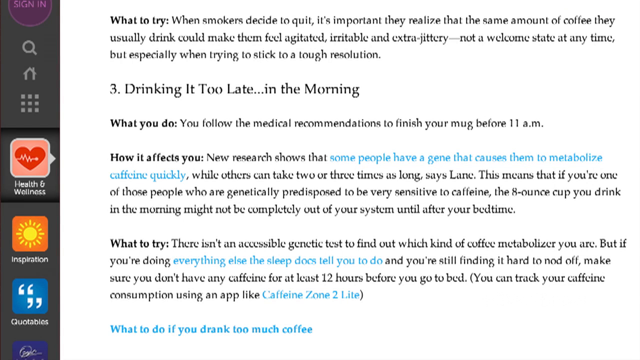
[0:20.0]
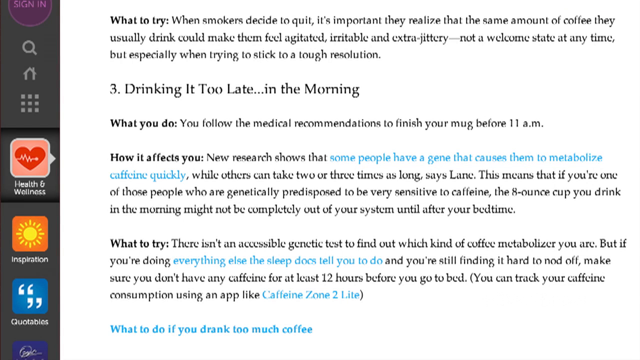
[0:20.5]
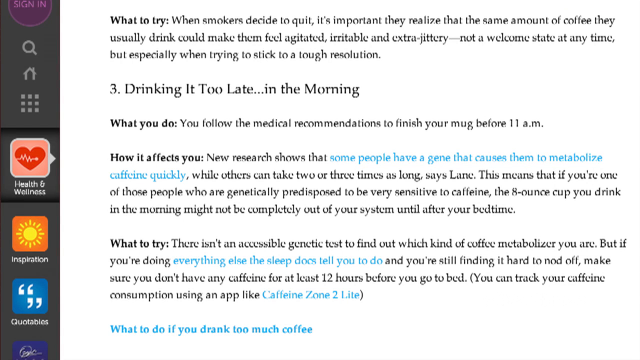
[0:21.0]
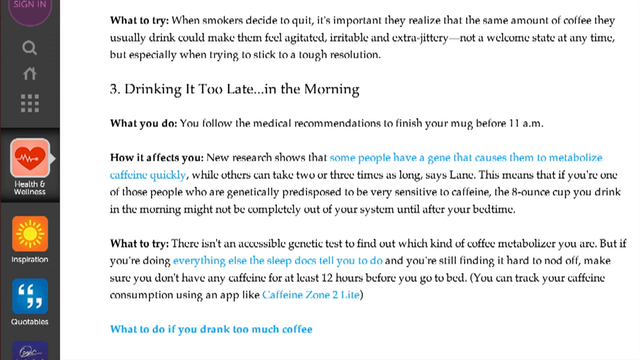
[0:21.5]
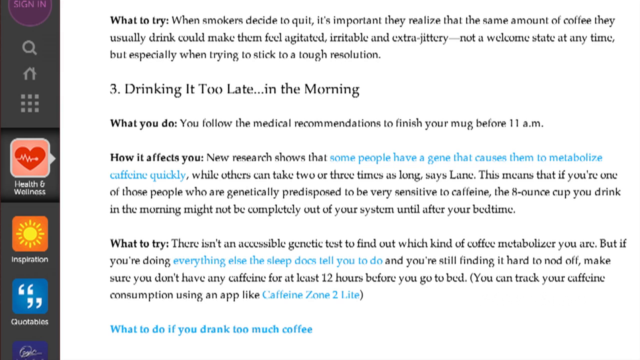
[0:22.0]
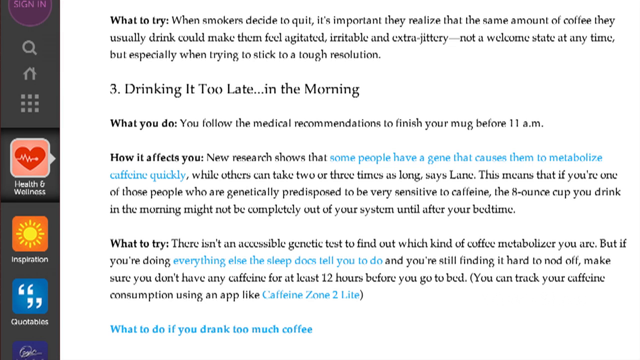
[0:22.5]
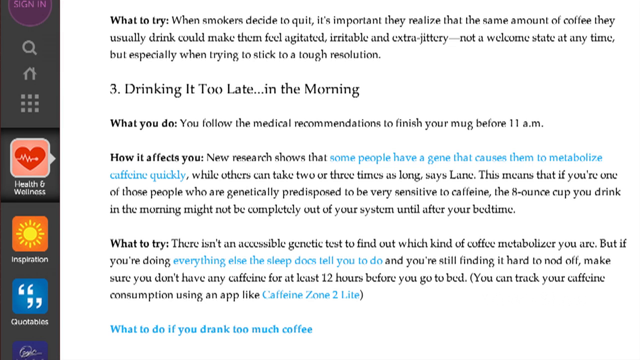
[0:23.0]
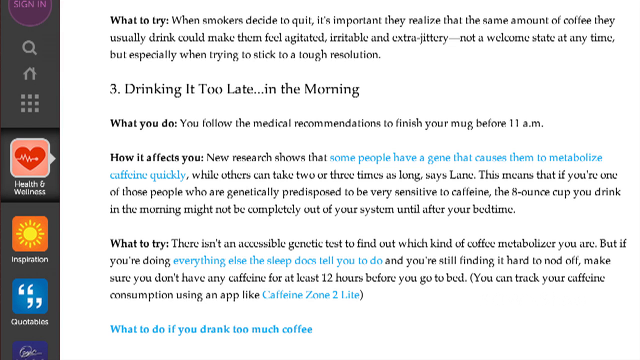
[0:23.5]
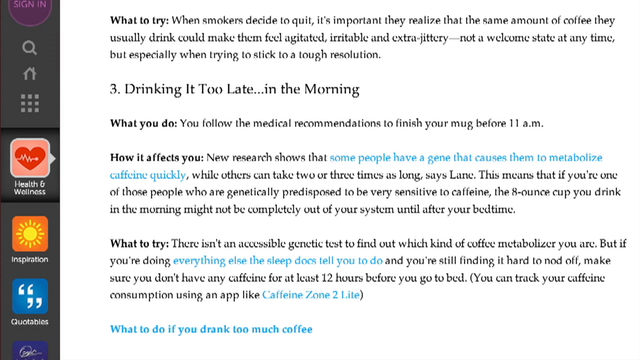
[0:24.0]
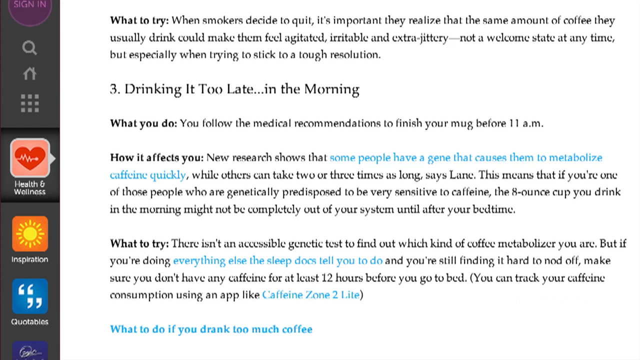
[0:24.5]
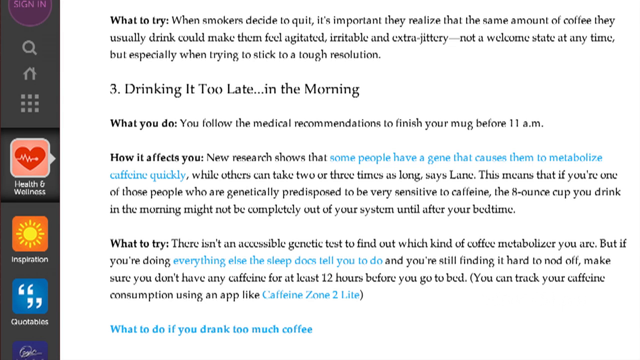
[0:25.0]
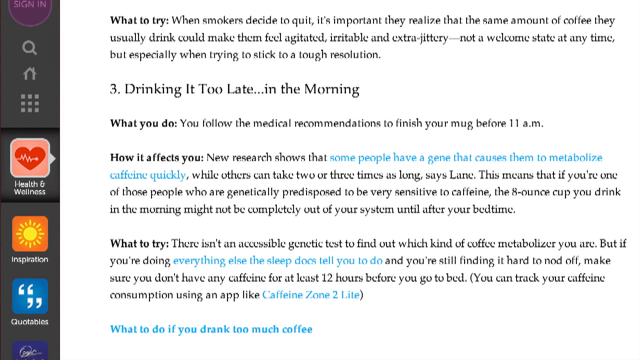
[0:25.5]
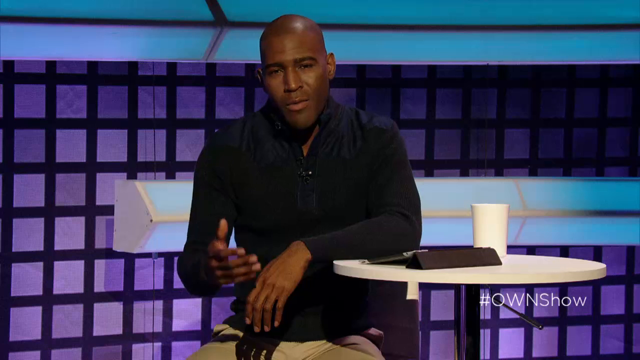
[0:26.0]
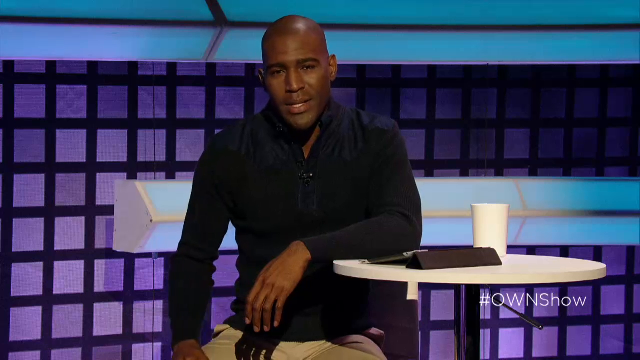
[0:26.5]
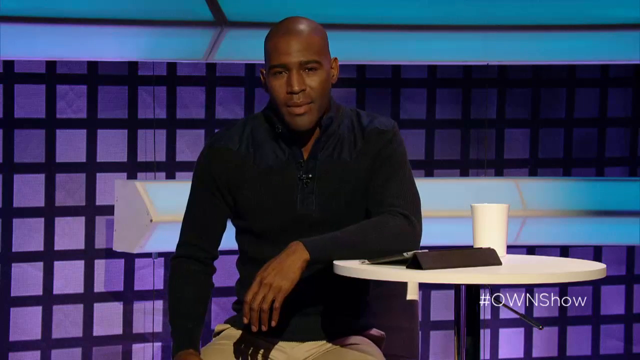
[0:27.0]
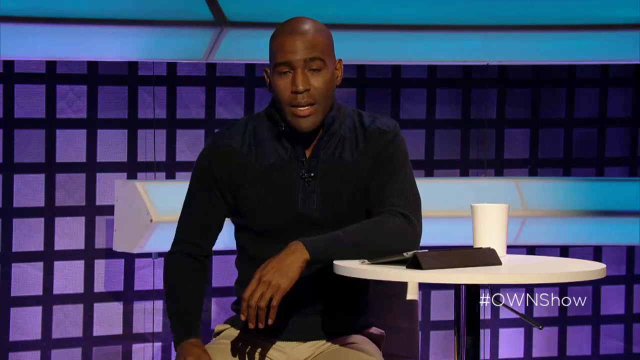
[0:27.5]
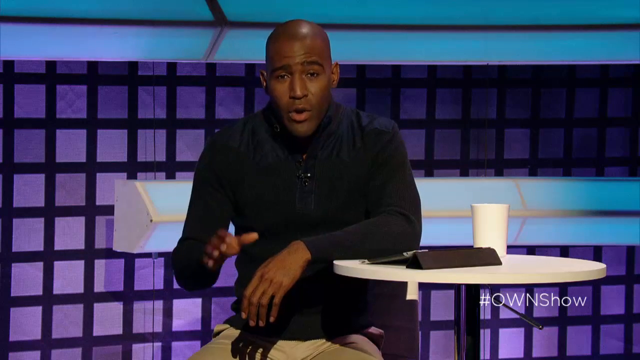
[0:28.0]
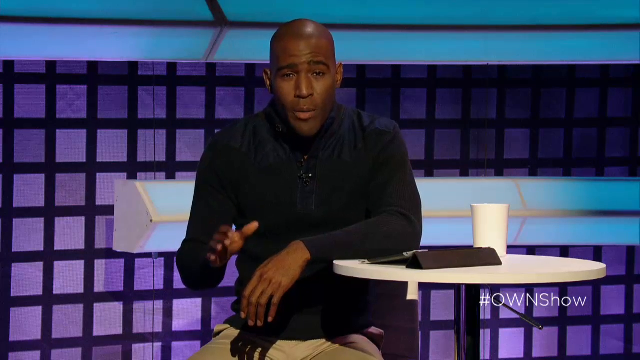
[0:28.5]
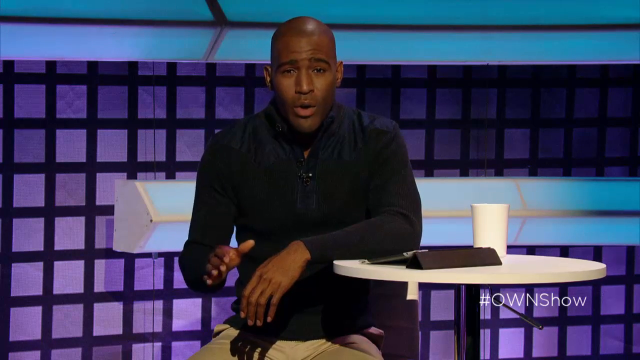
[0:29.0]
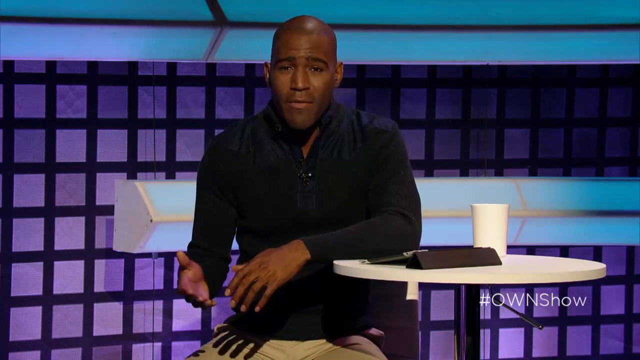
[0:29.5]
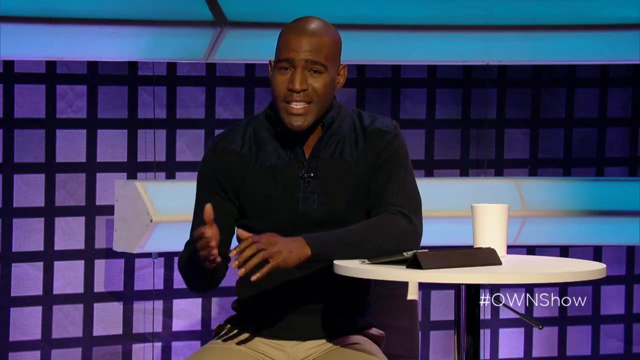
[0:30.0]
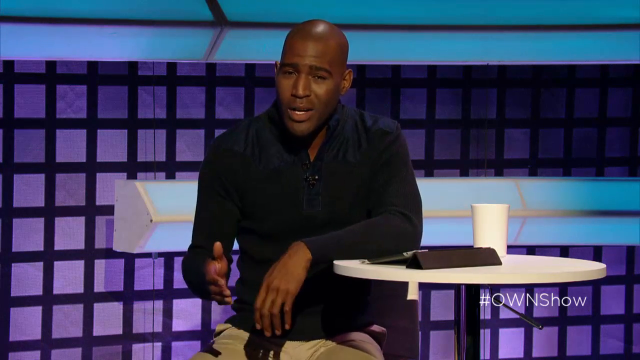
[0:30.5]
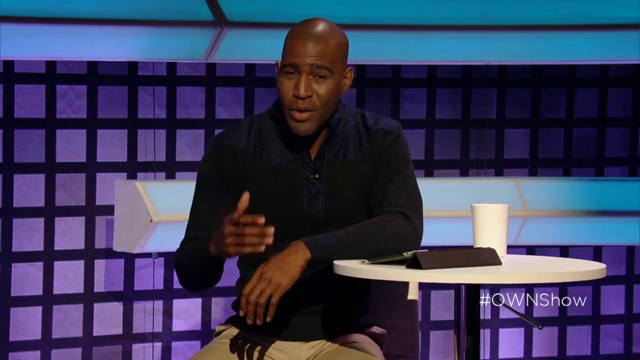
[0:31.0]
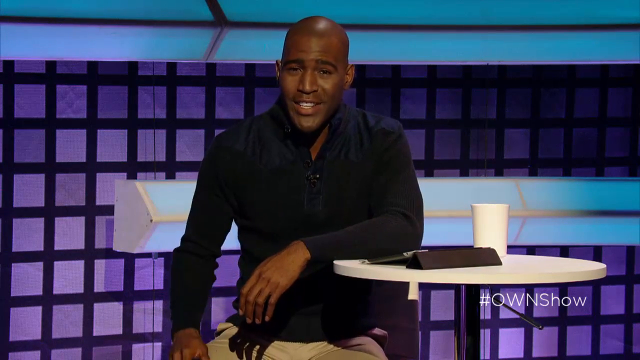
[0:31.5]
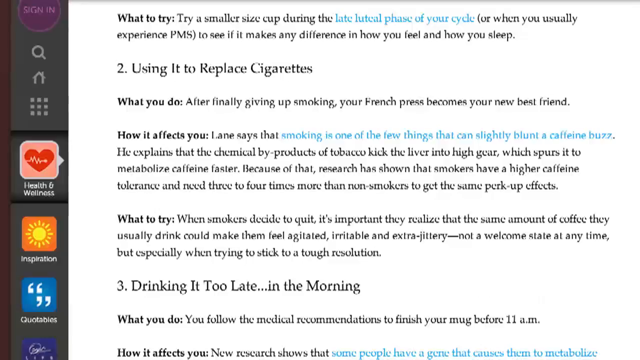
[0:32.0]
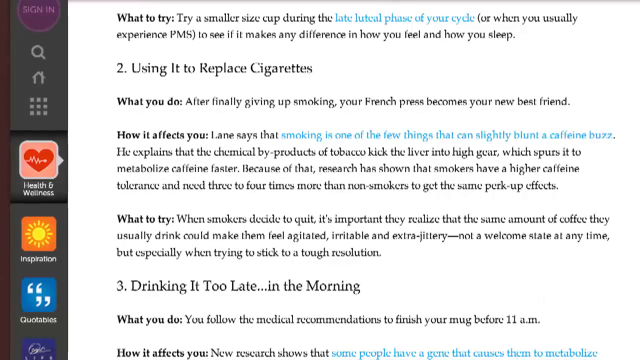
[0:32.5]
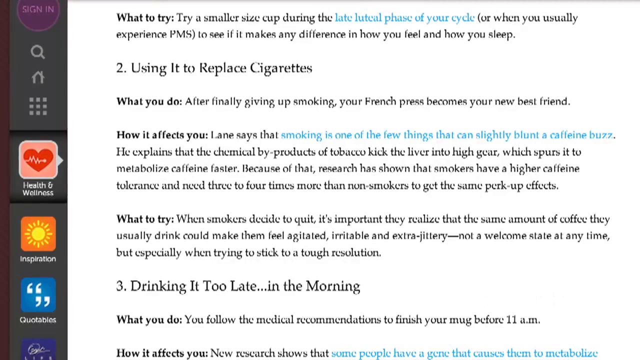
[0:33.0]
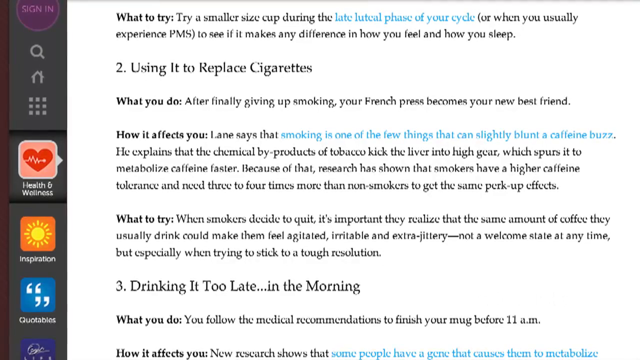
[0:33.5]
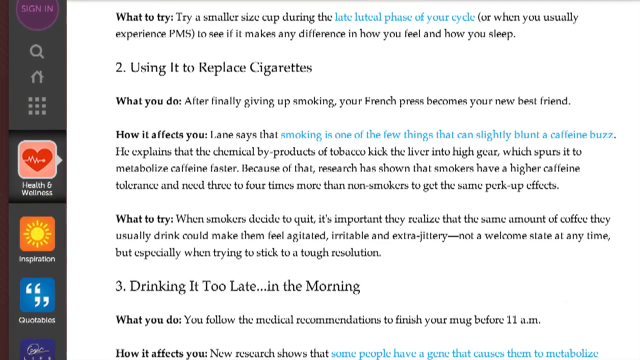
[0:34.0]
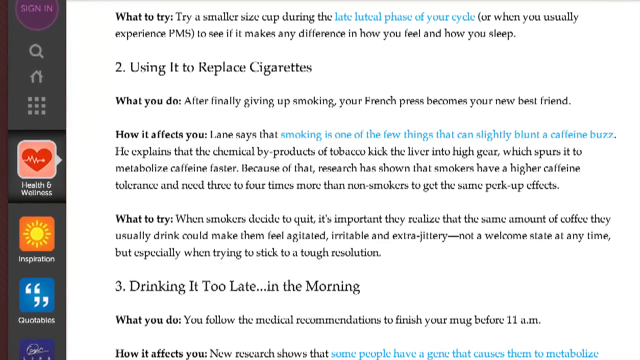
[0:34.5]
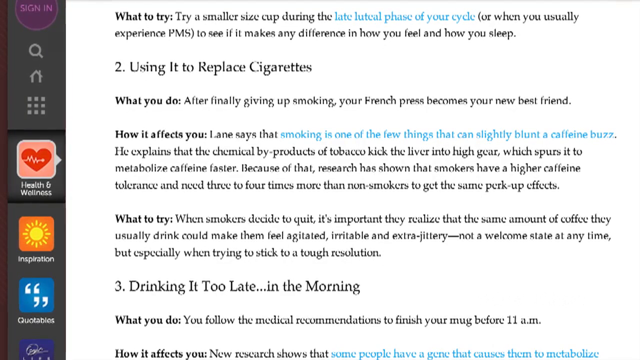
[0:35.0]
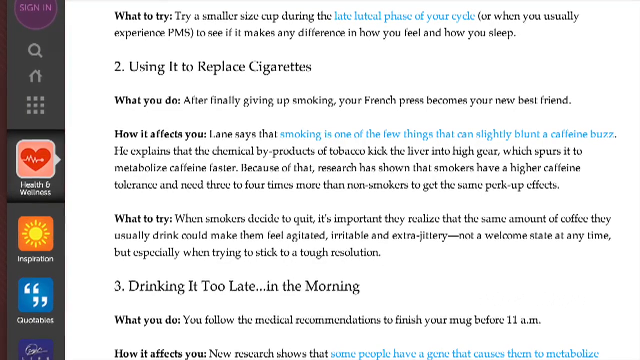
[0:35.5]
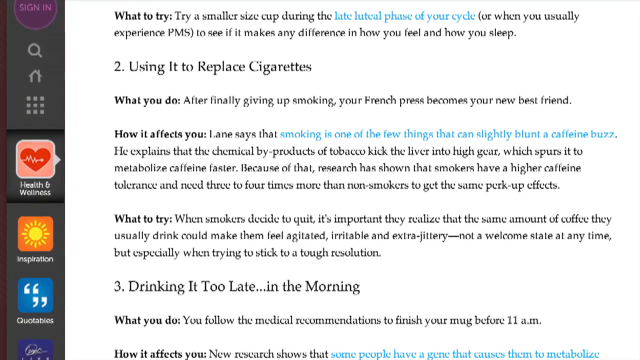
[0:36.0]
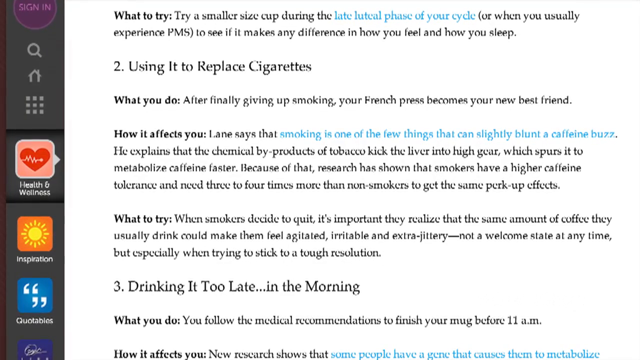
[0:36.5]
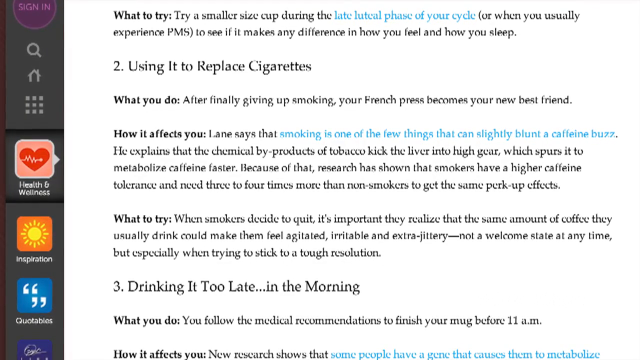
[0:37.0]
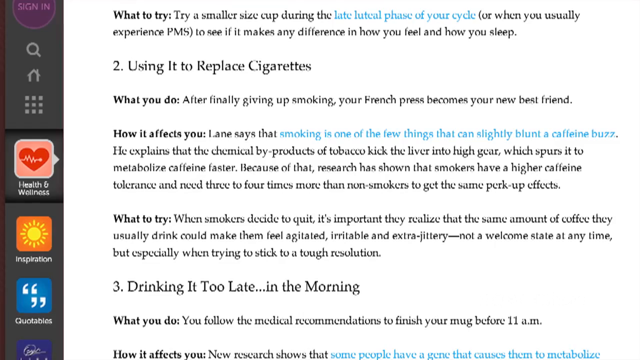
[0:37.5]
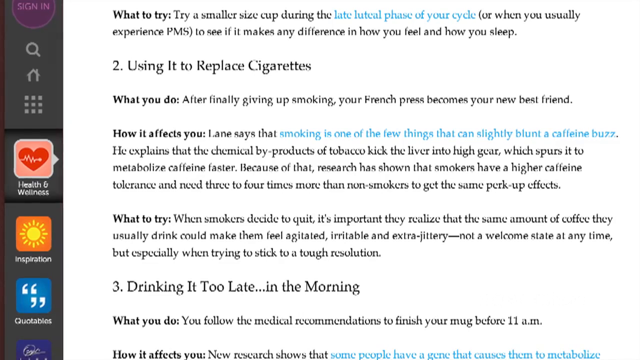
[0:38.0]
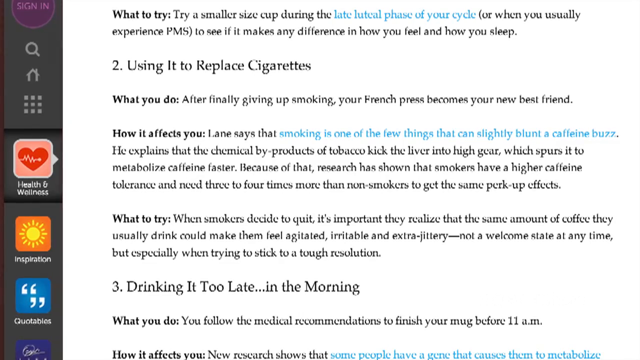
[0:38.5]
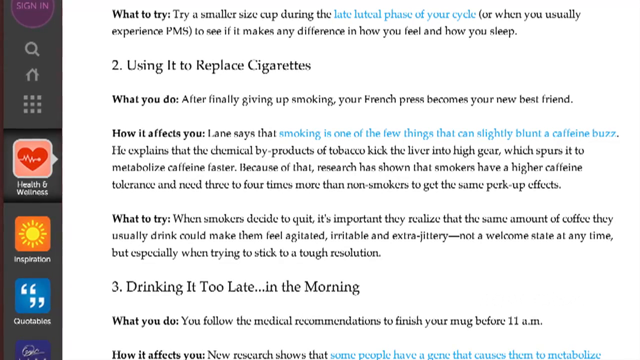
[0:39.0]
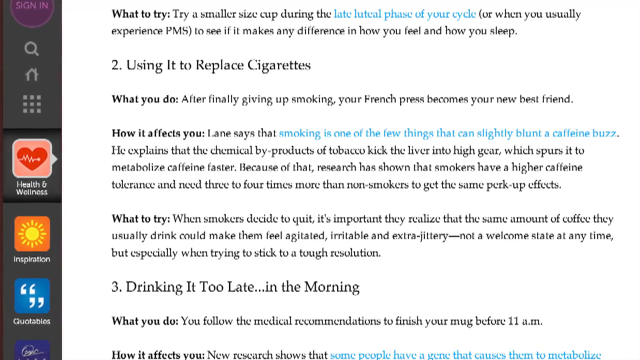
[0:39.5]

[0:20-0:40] An article appears to be shared on screen. On the side of the screen are tabs reading "health and wellness," "inspiration" and "quotables." The zoomed-in part of the article reads "drinking it too late in the morning," followed by sections on what you do, how it affects you, and what to try differently. The image then cuts to a man talking to the camera. He sits at a white-topped table with what looks like an iPad in front of him; a white mug and the iPad are on top of the table. He wears what looks like a black button-down shirt and is visibly speaking. The video then cuts to another part of the article reading "number two, using it to replace cigarettes," with sections on what you do, how it affects you, and what to try differently.